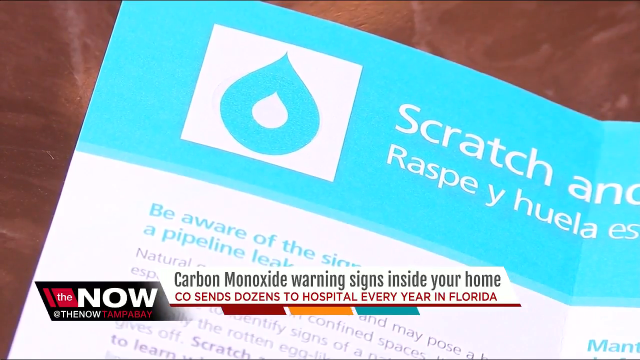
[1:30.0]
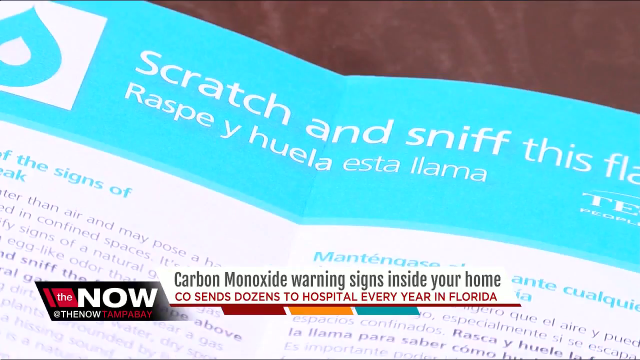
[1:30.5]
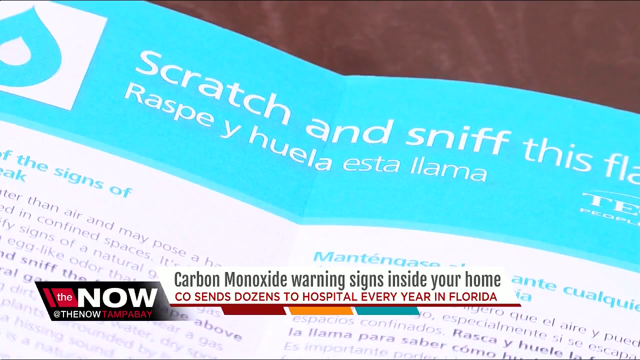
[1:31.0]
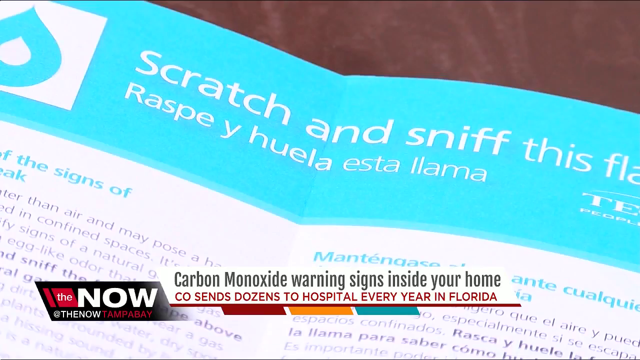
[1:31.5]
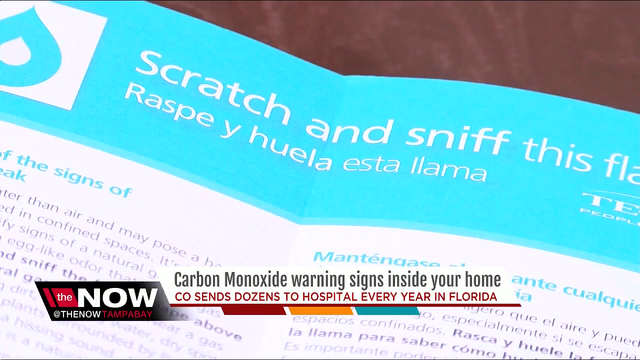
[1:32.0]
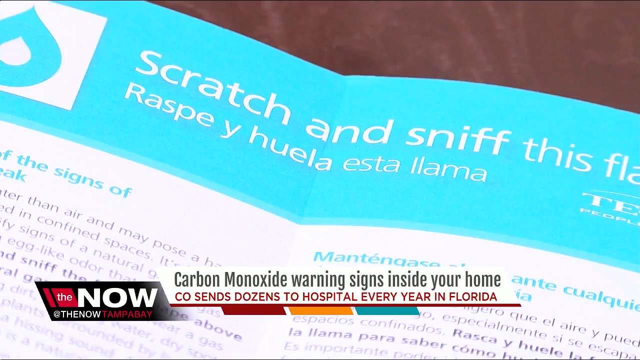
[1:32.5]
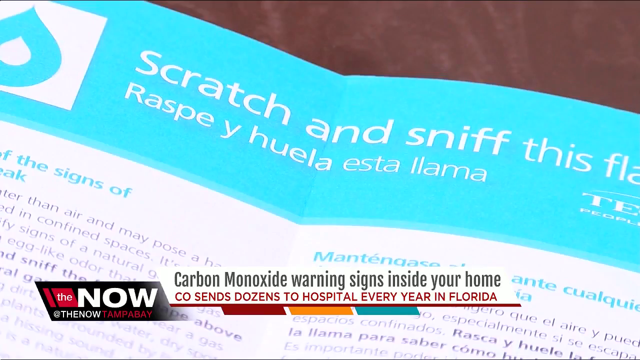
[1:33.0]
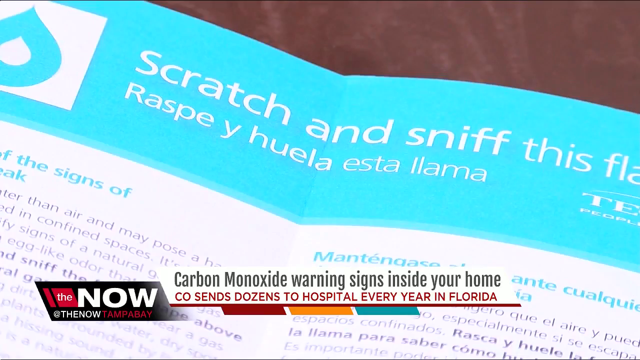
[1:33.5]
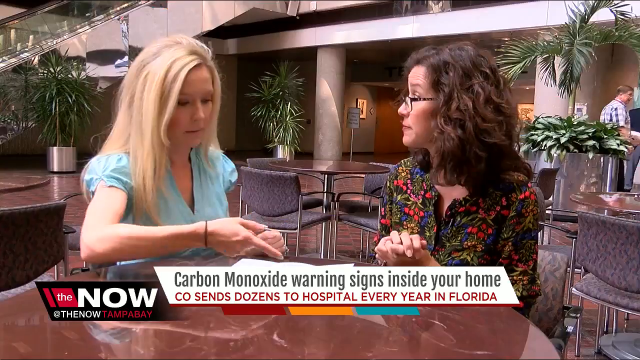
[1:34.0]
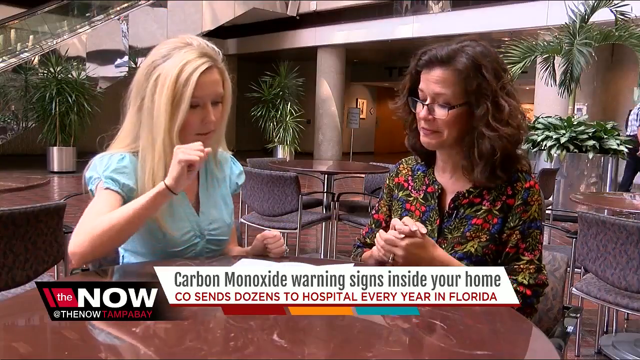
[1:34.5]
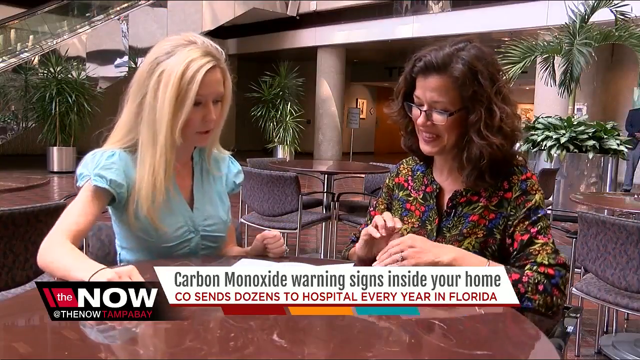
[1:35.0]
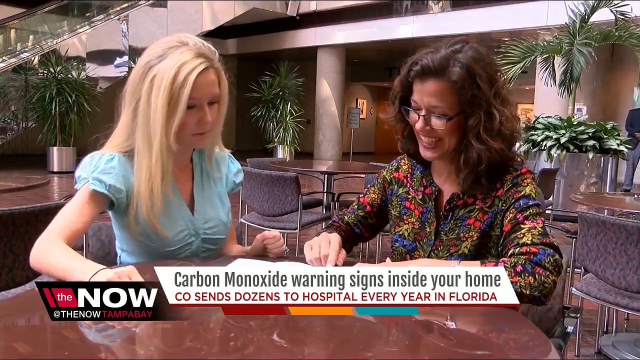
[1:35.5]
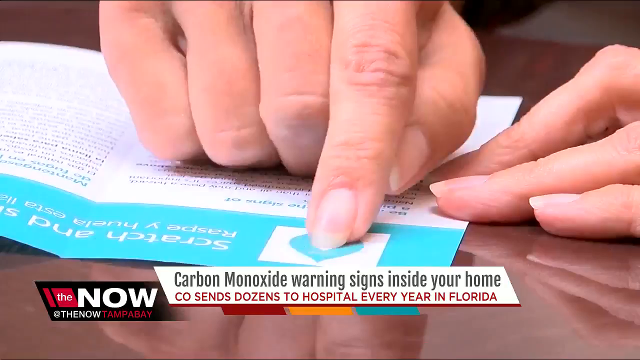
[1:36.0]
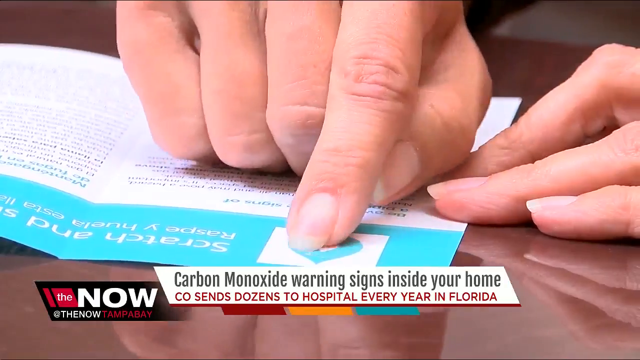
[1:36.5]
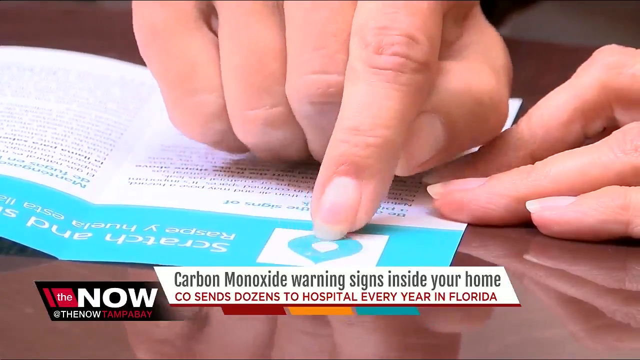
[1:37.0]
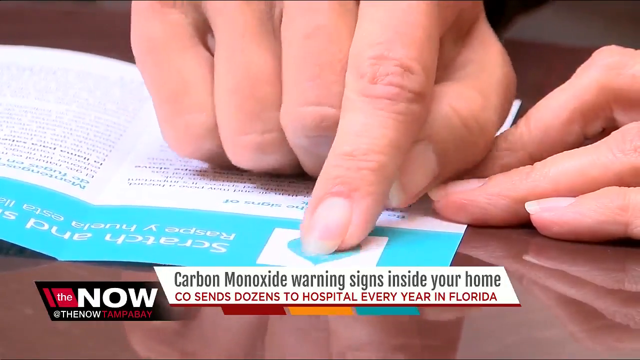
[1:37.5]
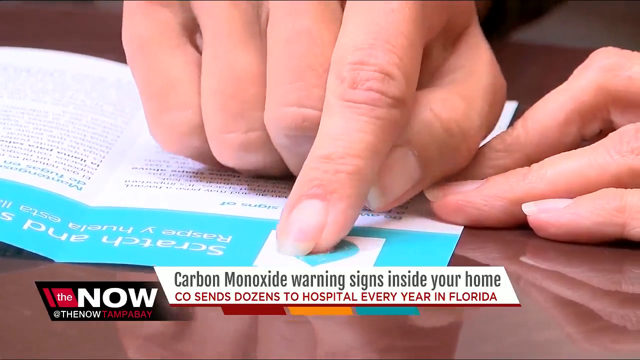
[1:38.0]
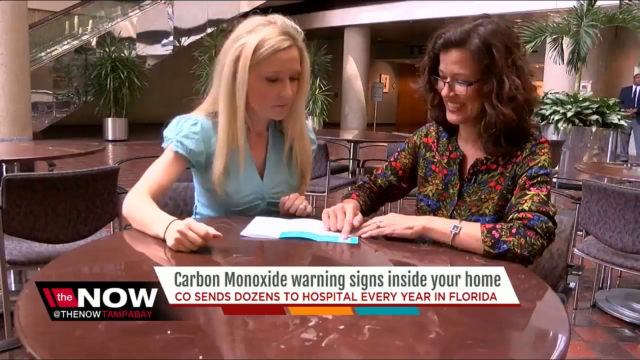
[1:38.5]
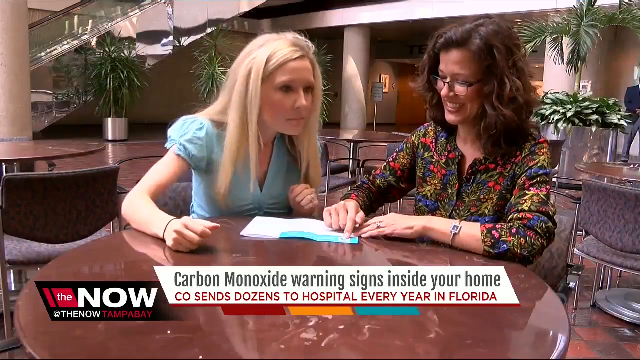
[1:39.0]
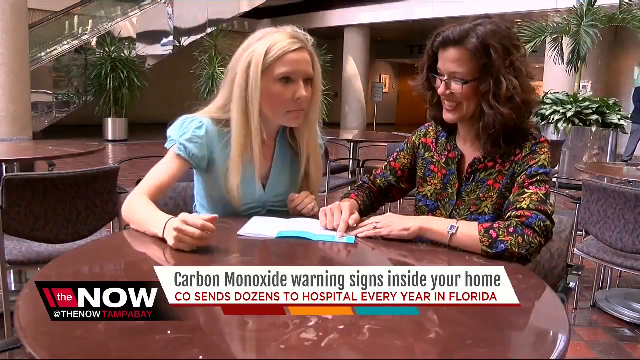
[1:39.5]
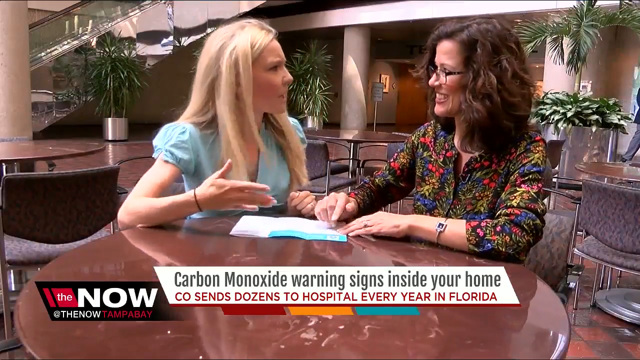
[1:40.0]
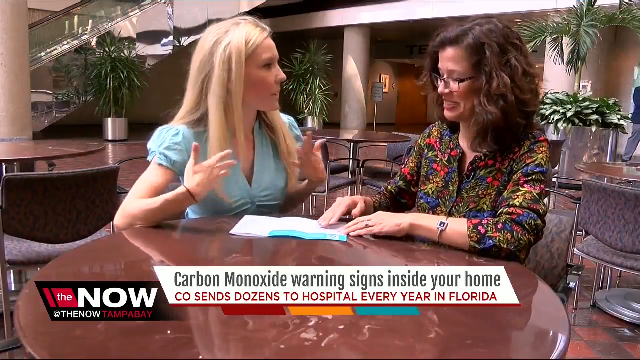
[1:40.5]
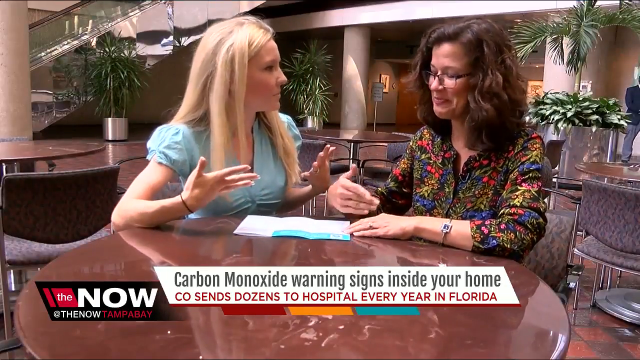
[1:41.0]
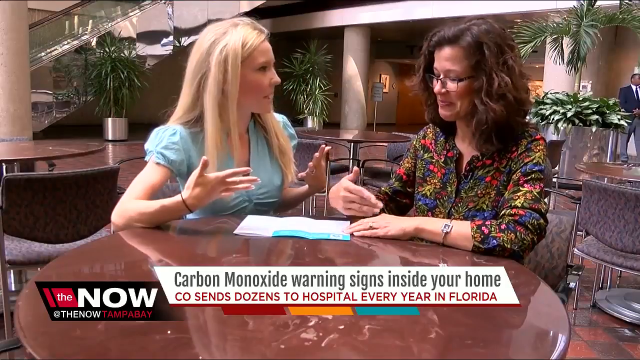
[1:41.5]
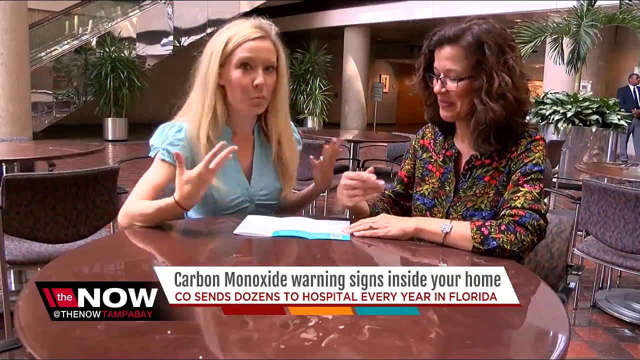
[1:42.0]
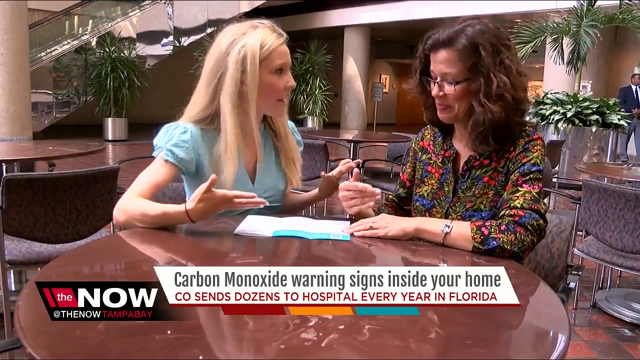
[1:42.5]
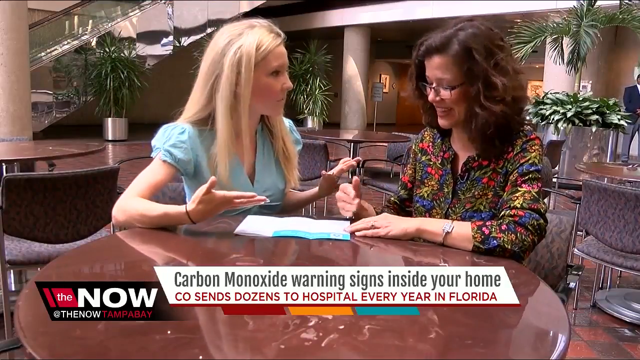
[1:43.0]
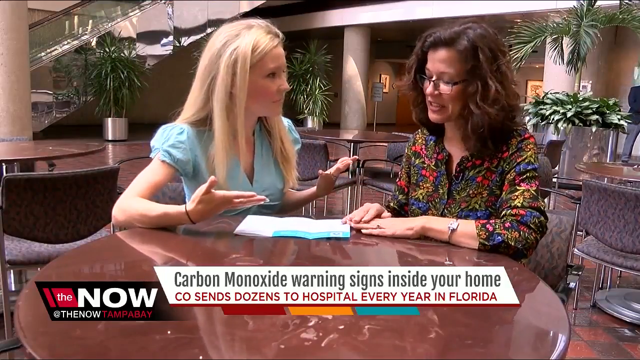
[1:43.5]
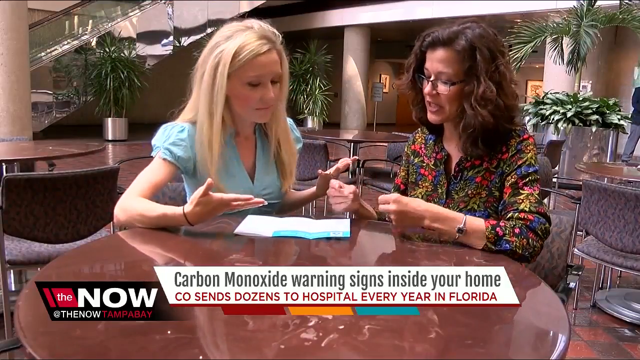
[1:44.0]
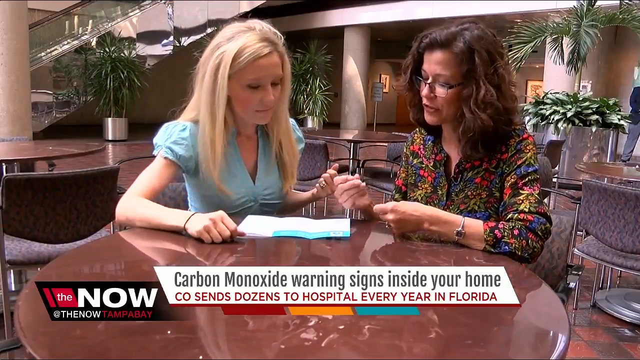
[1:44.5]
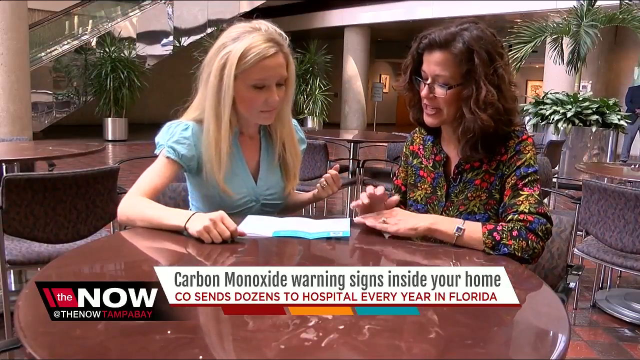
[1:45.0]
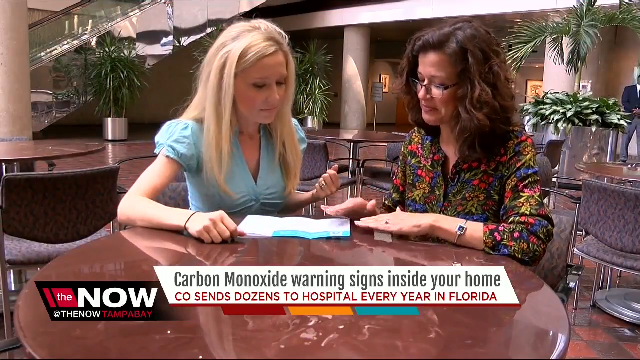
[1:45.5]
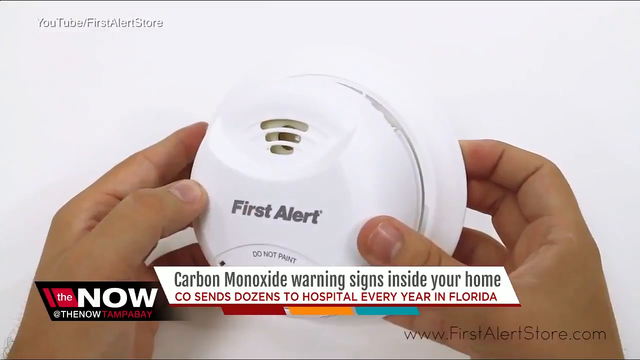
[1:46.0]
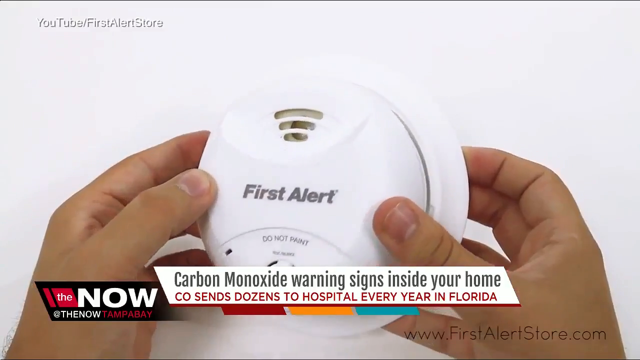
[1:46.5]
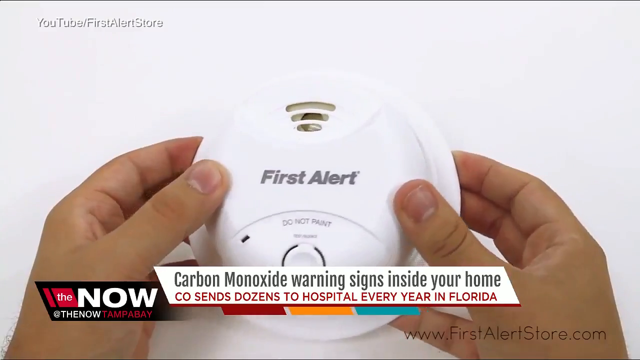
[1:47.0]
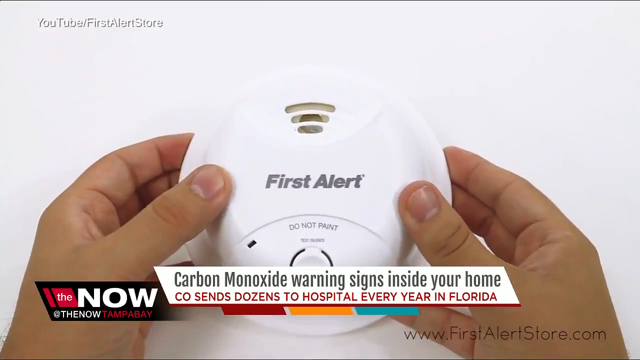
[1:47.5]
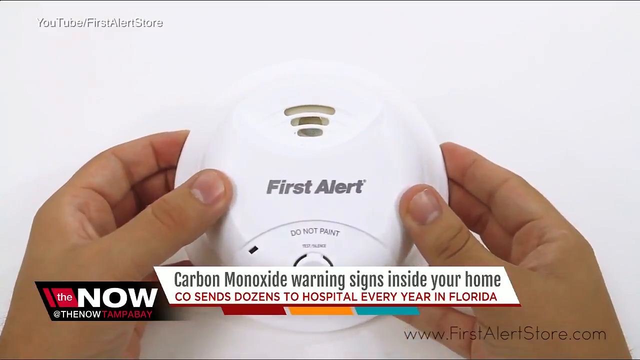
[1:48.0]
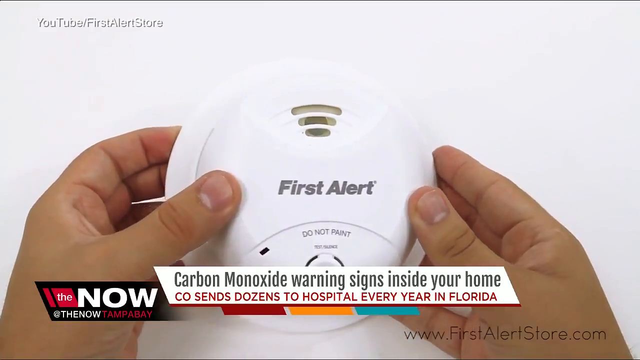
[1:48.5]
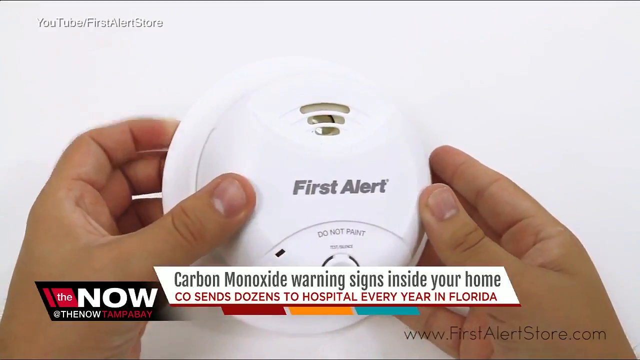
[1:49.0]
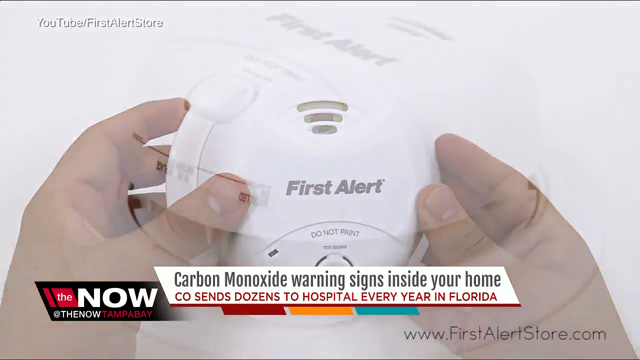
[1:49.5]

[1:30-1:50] A white sheet of paper with a blue background at the top is shown, with a reddish-brown tabletop behind it. White lettering at the top right reads "scratch", with white lettering underneath in another language. On the left is a white box with a blue water-drop image and another white image in the middle of the drop. The white banner at the bottom reads in black letters "carbon monoxide warning signs inside your home", with red lettering below it. Underneath are red, orange and teal boxes. To the bottom left is a black box with a red box inside holding the white letters "the"; beside it, white letters on a black background read "now", with "at the now" in white underneath and "Tampa Bay" in red. The camera shifts over a little to where it reads "scratch and sniff this", with white lettering underneath in another language, possibly Spanish. The next image shows two white women. The woman on the left has blonde hair and a teal short-sleeved top; the woman on the right has black hair, black-rimmed glasses and a red, blue and green long-sleeved top. They are sitting at a rounded reddish-brown table on purple chairs. Behind them are gray columns and silver plant holders with green plants and green stems. In front of them is the white sheet of paper or booklet with the green top, and she seems to be rubbing the water-drop image, apparently giving off a smell, as they both react to it. The next image shows white hands holding a round carbon monoxide device. Gray lettering on the front reads "first alert", with "do not paint" underneath and three lines over top of it. At the top left, white text reads "YouTube / first alert store", and at the very bottom right, black text reads "www.firstalertstore.com". The camera then zooms in on the First Alert device as it is laying down.